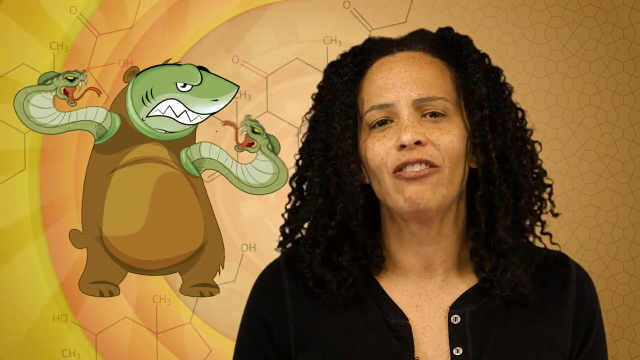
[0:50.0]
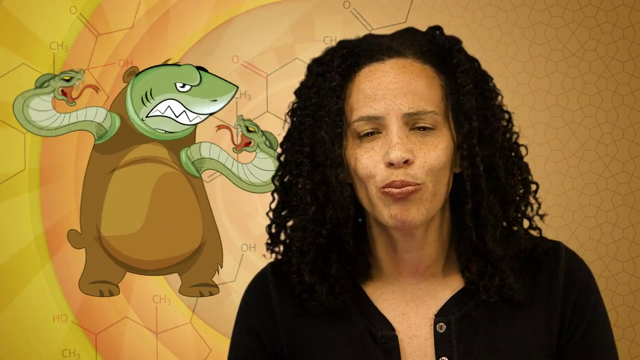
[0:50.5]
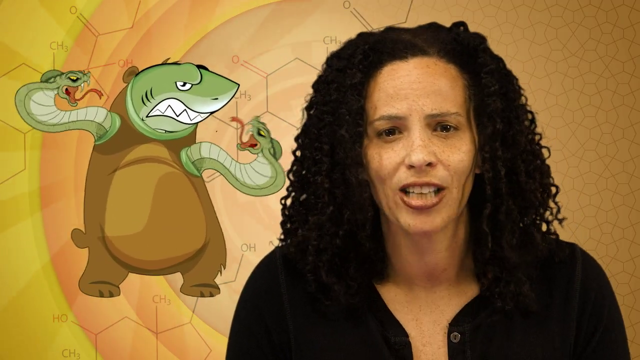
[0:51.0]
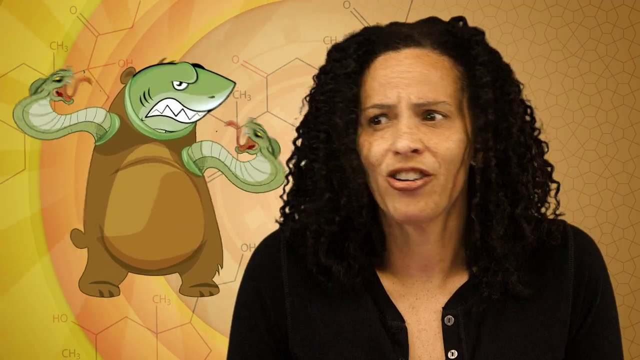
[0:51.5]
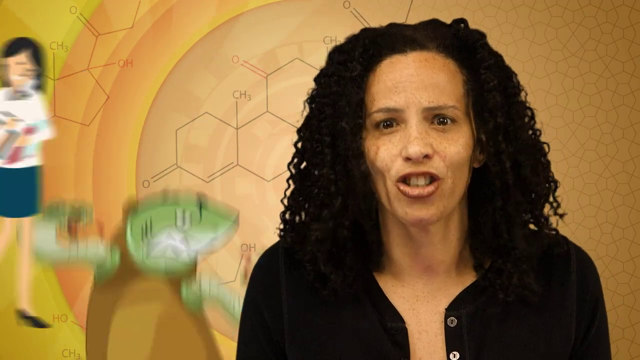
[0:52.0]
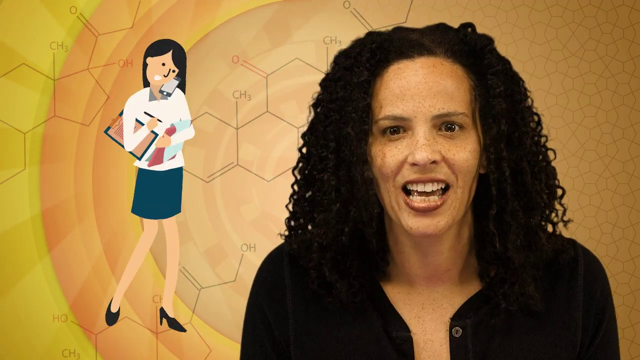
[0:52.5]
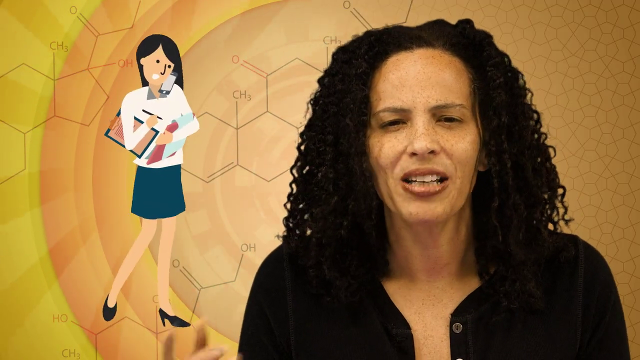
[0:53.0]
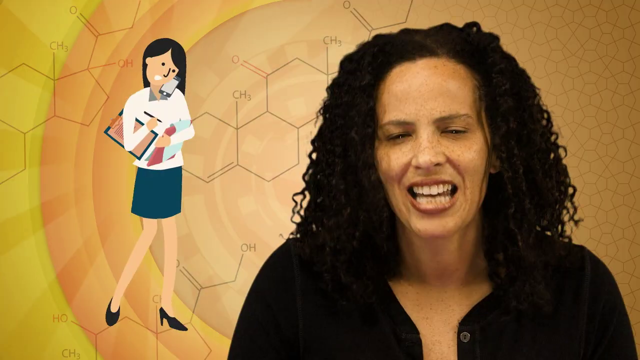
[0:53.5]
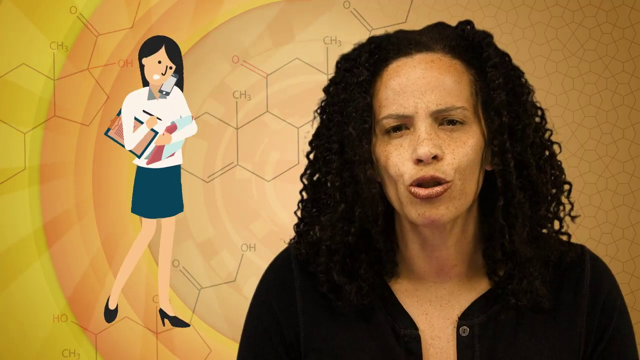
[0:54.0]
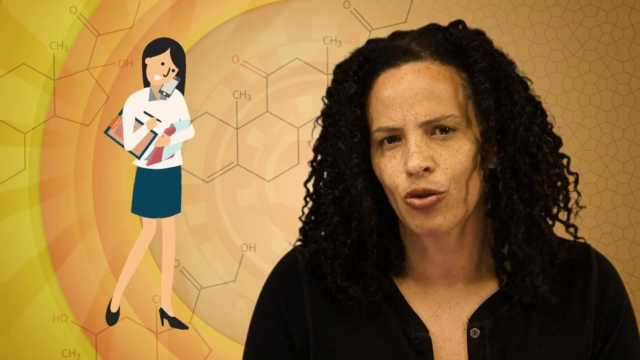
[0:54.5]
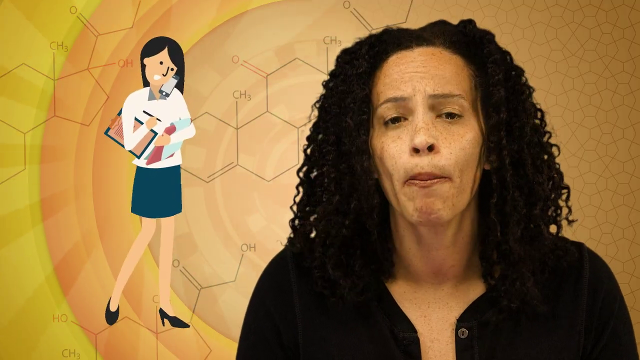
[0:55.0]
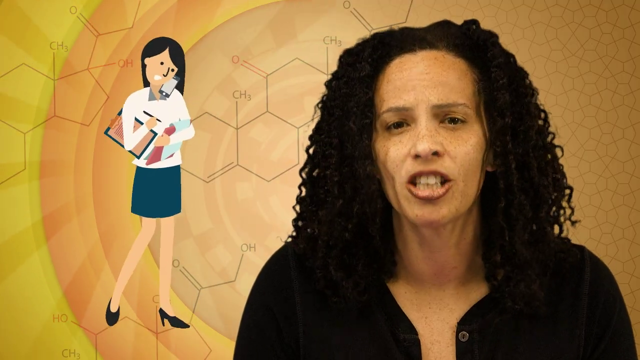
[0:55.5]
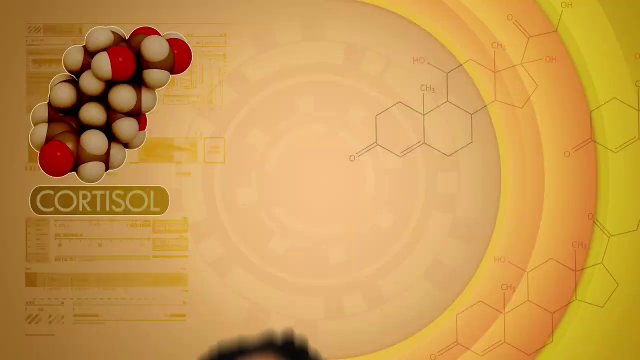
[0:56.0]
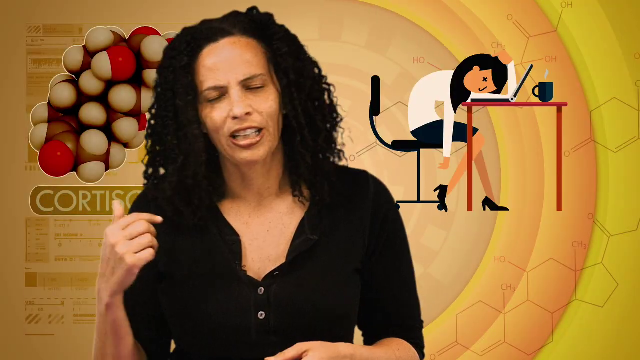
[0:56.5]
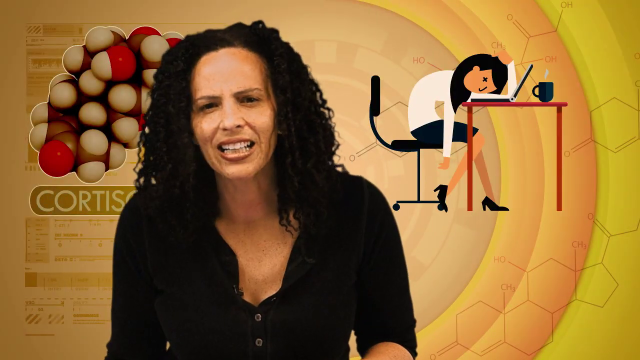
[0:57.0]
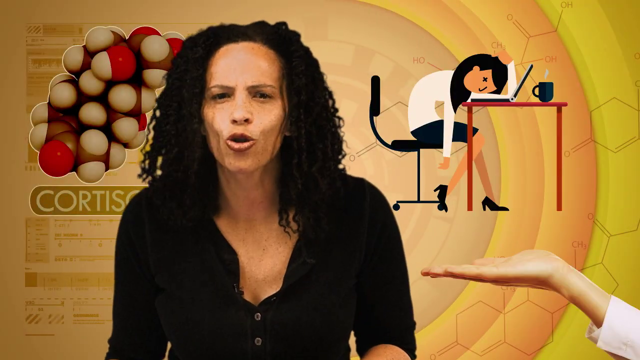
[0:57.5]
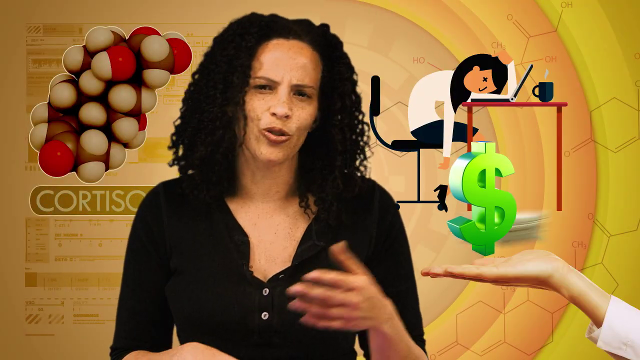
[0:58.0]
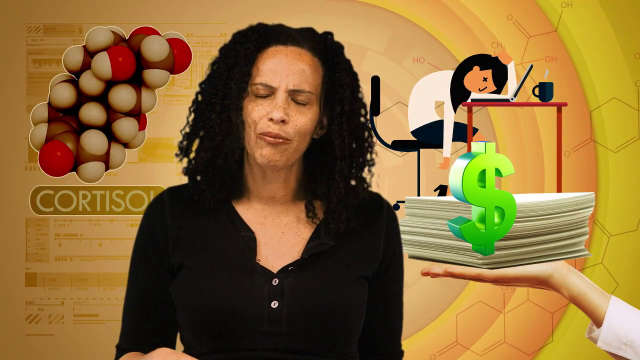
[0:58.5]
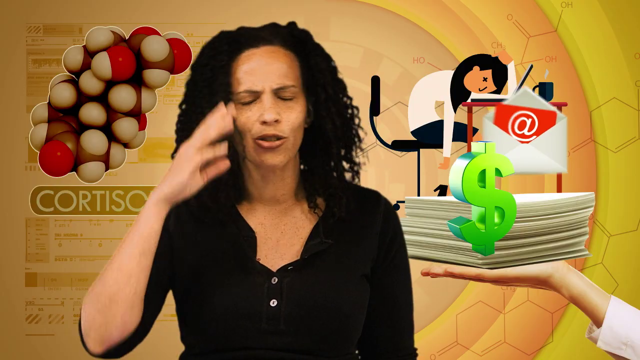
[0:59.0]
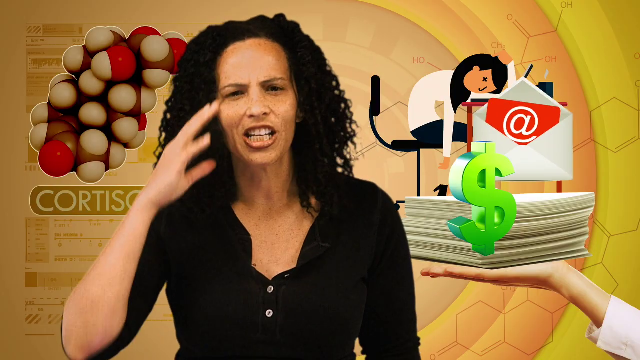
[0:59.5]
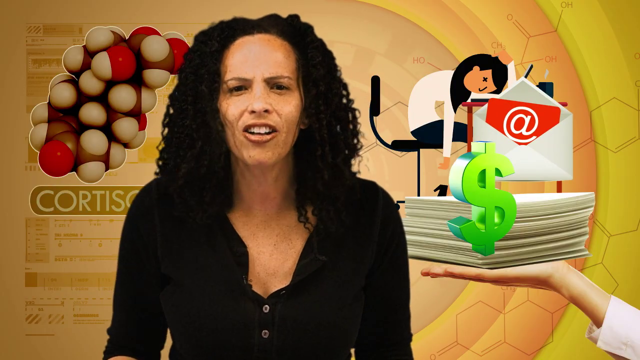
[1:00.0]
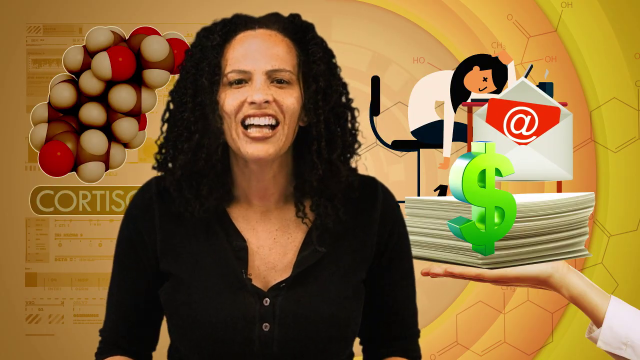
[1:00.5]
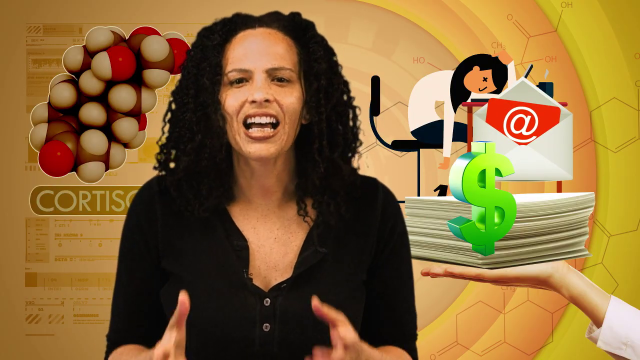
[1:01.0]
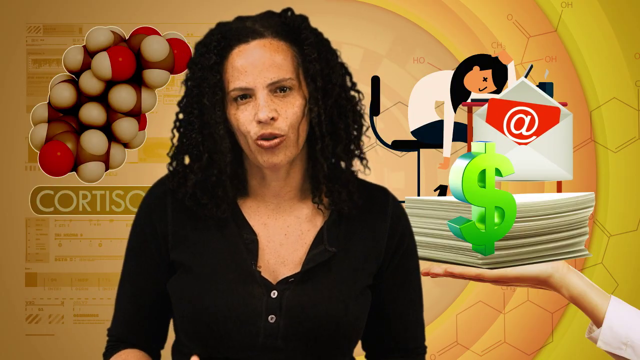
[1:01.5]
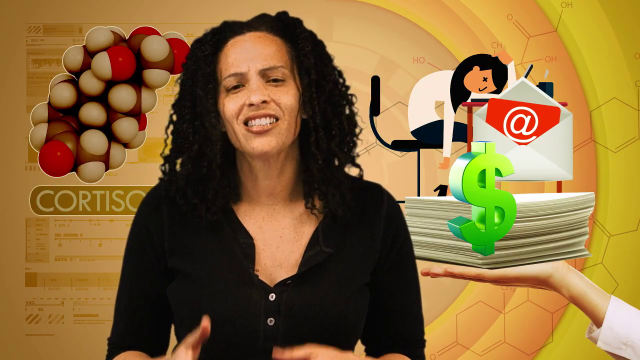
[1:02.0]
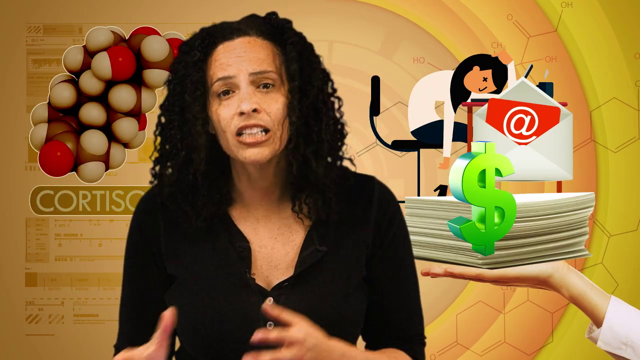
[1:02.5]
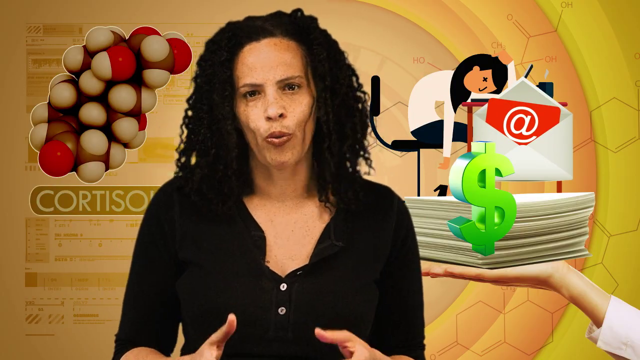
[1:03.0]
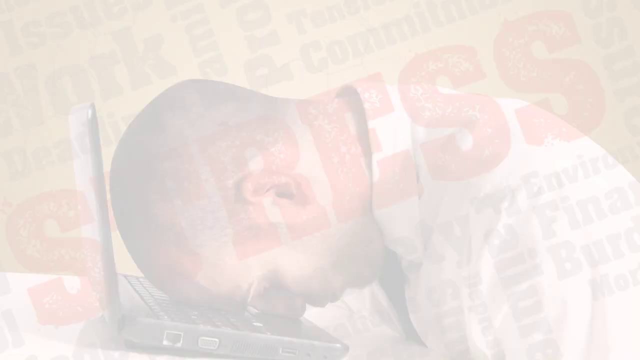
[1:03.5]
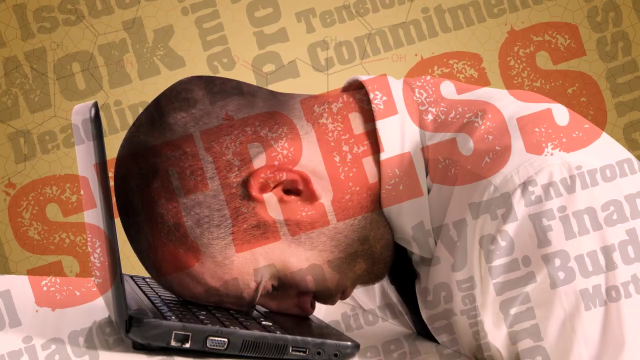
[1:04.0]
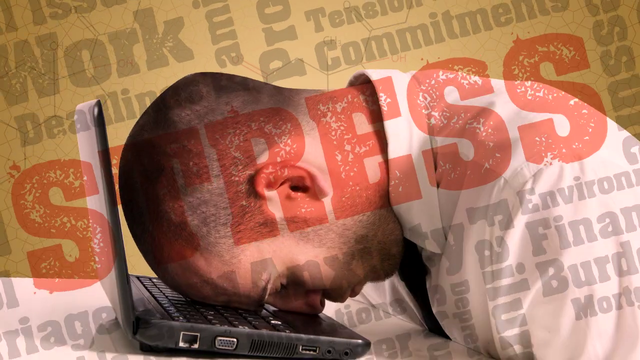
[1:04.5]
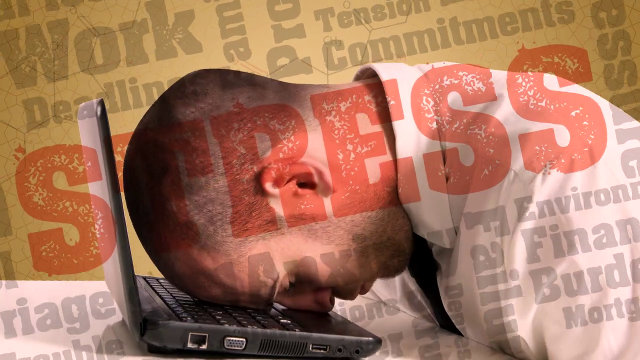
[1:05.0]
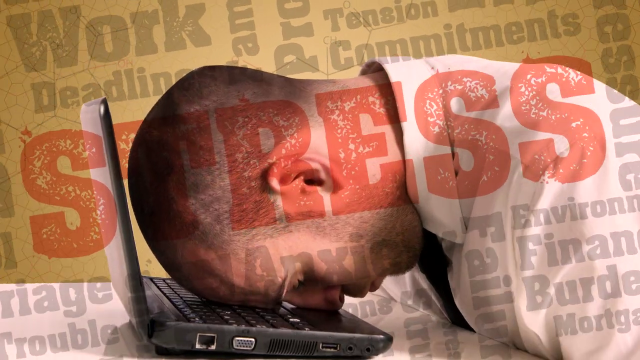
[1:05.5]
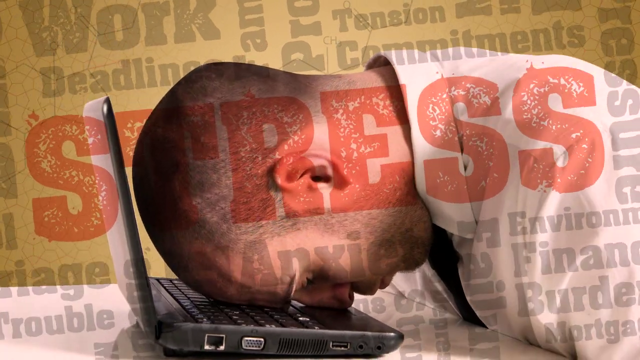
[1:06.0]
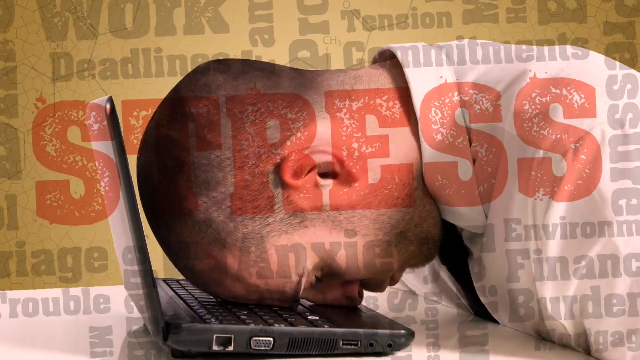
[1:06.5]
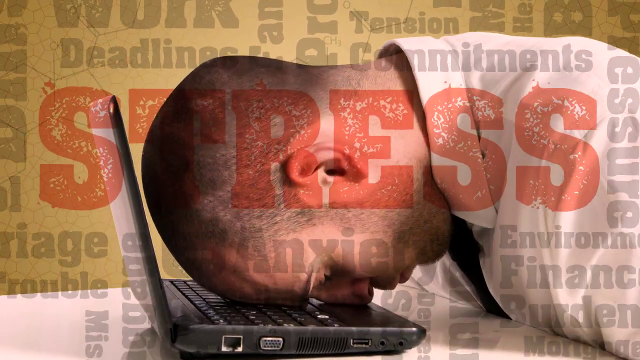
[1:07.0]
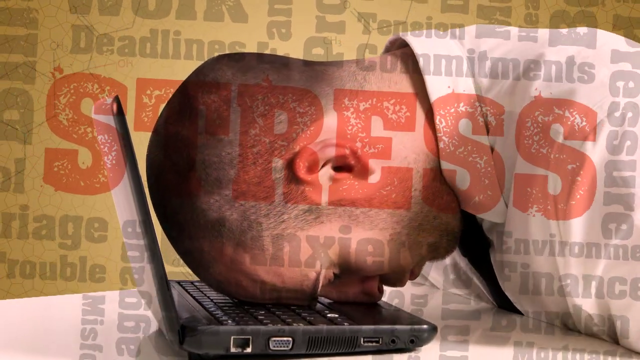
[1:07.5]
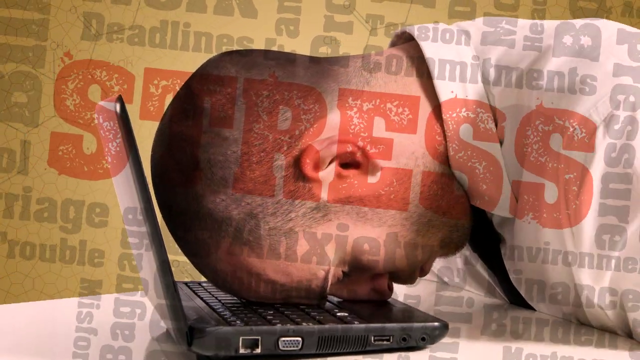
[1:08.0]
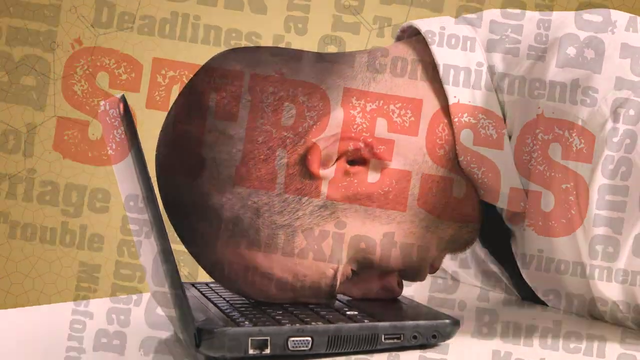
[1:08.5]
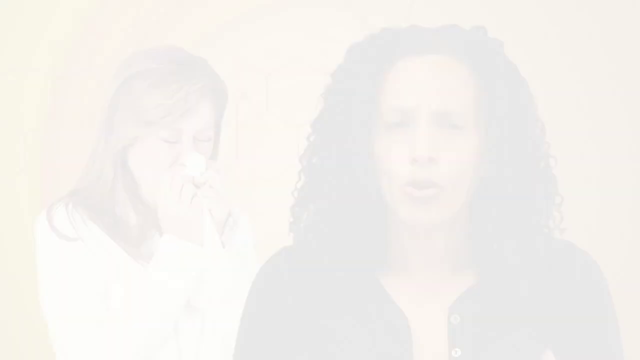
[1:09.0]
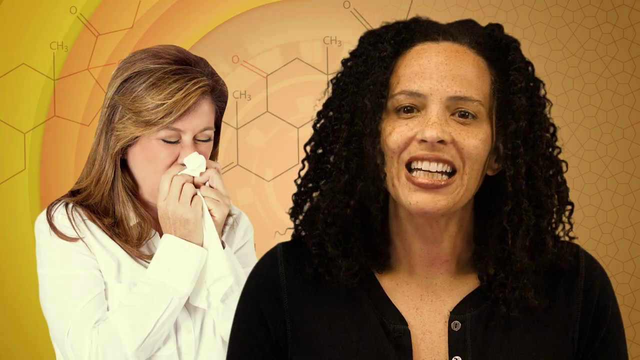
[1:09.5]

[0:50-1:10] The woman keeps talking while looking at the viewer. On the left, the monster disappears and is replaced by a woman talking on the phone while writing on a clipboard in front of her, holding another clipboard between her right arm and her body as she multitasks. The scene changes: the woman with thick black hair is in the middle, and on the right the multitasking woman appears worn out, her head down on a desk in front of a laptop. In the bottom right, a hand pulls up a stack of papers, and a money sign and a white envelope representing an email appear. A cortisol molecule or hormone appears in the top left. Then a man rests his head down on an open laptop while the word "stress" in light red covers him and the whole screen, surrounded by many negative words such as "deadlines," "commitments," "trouble" and "misfortune."